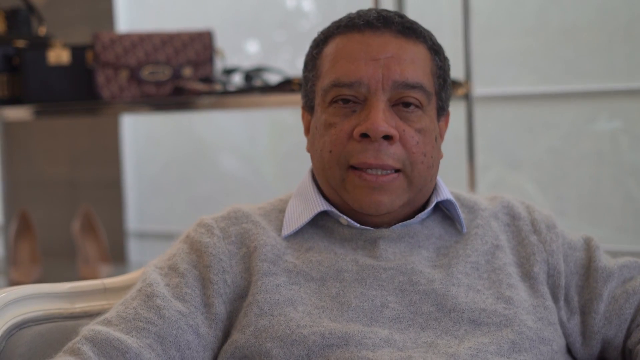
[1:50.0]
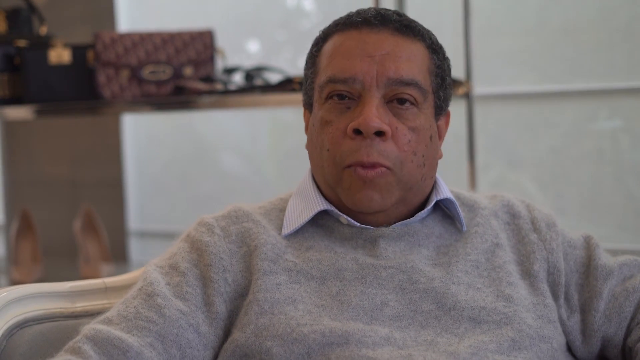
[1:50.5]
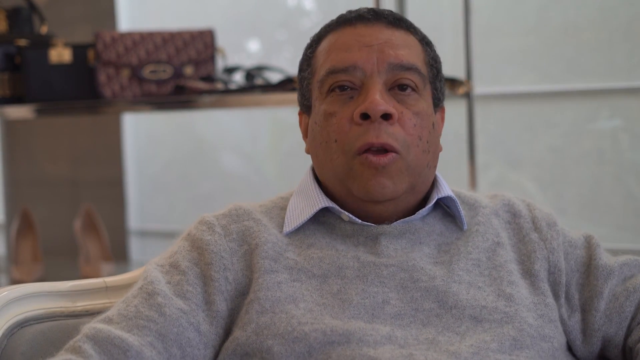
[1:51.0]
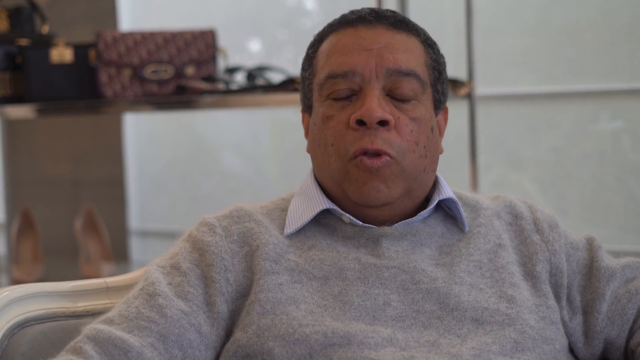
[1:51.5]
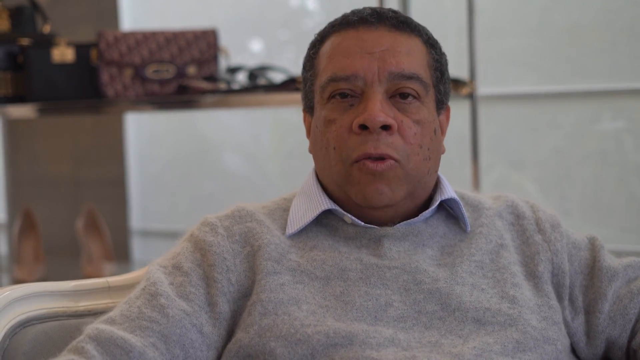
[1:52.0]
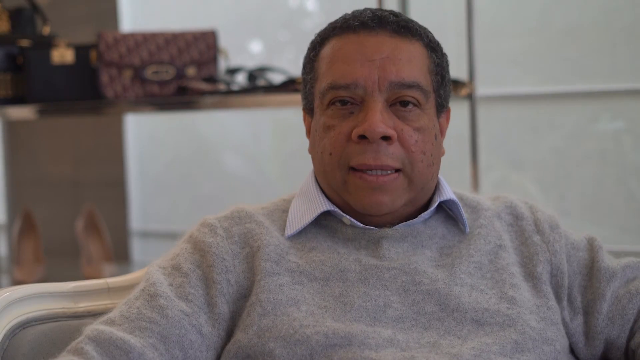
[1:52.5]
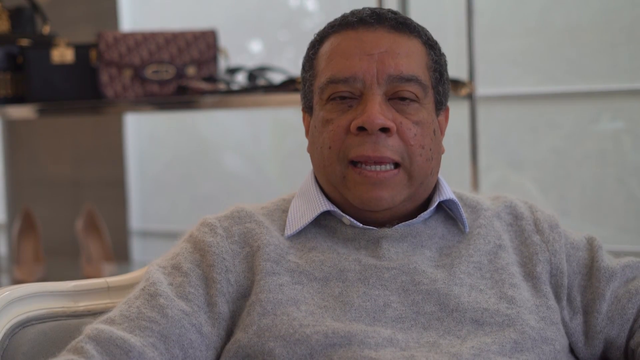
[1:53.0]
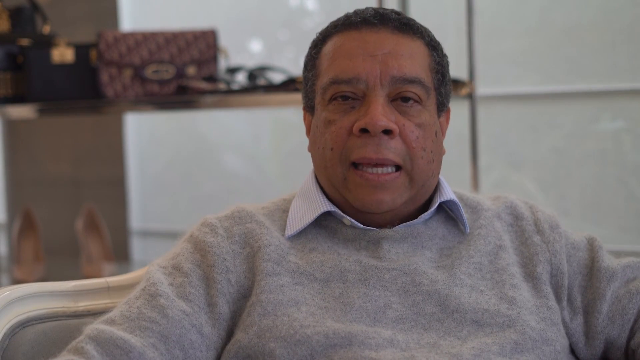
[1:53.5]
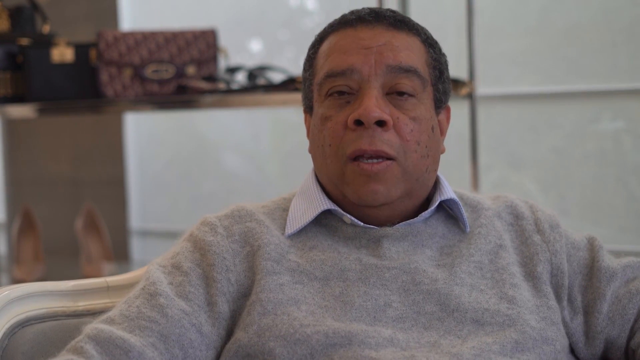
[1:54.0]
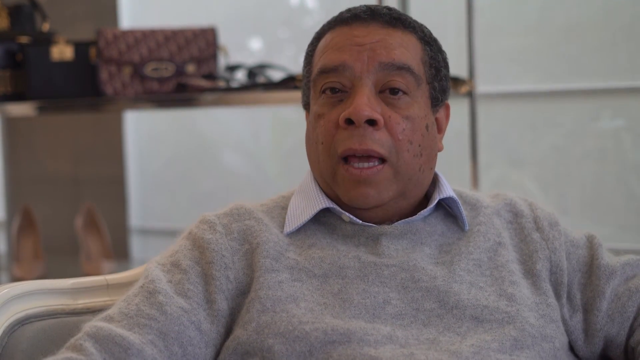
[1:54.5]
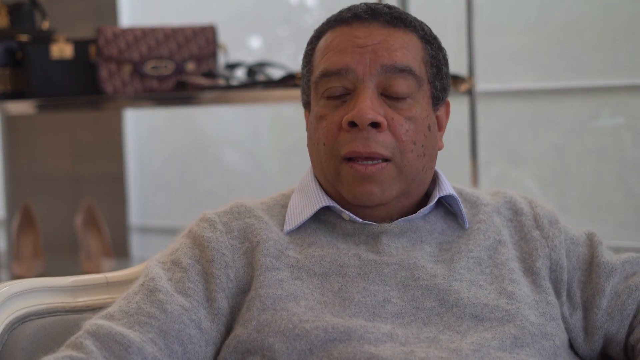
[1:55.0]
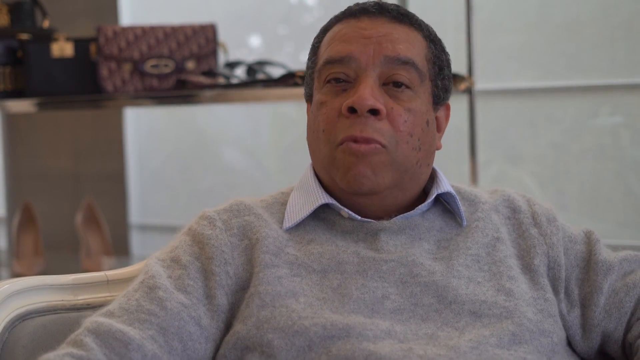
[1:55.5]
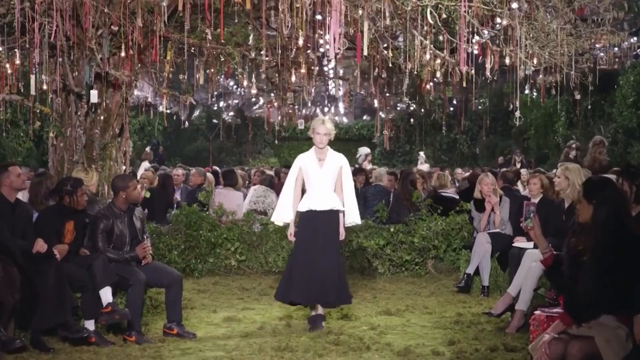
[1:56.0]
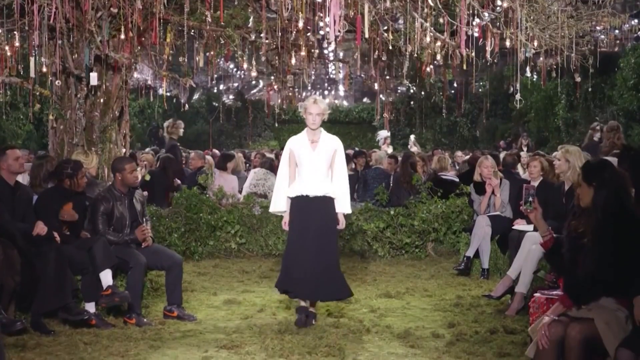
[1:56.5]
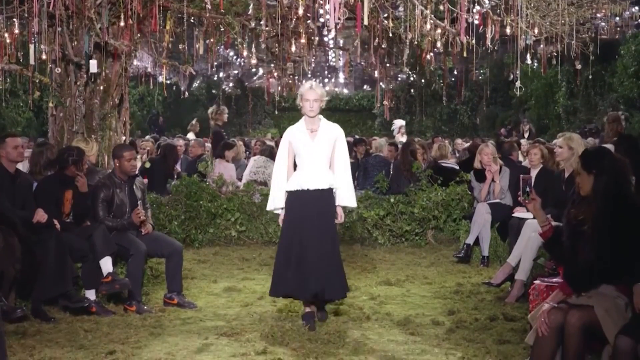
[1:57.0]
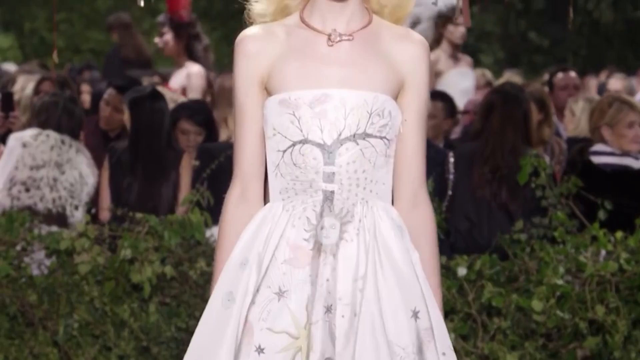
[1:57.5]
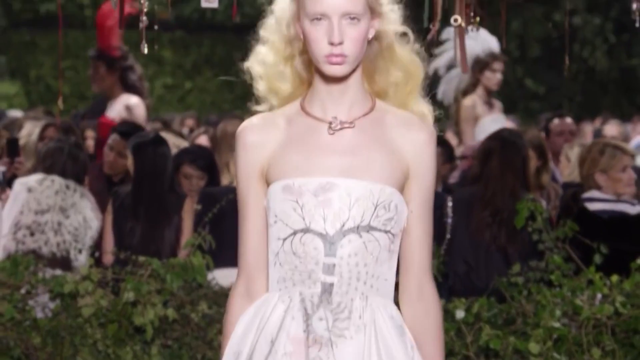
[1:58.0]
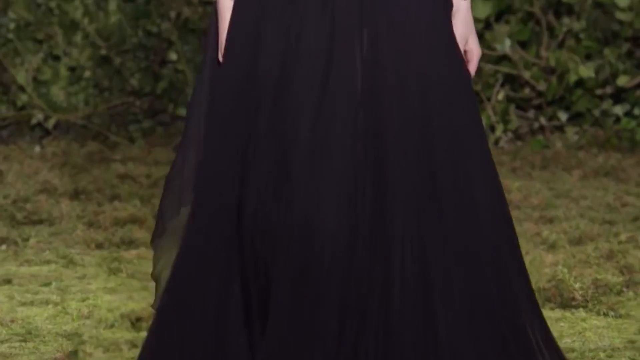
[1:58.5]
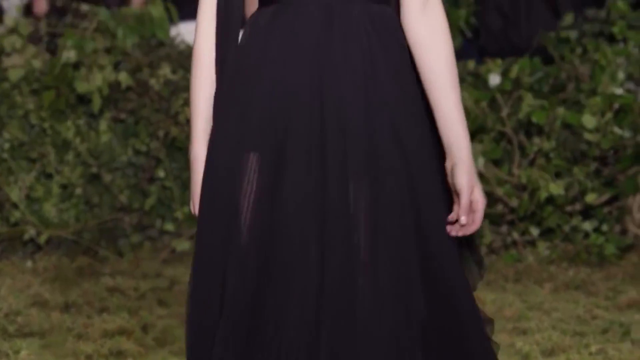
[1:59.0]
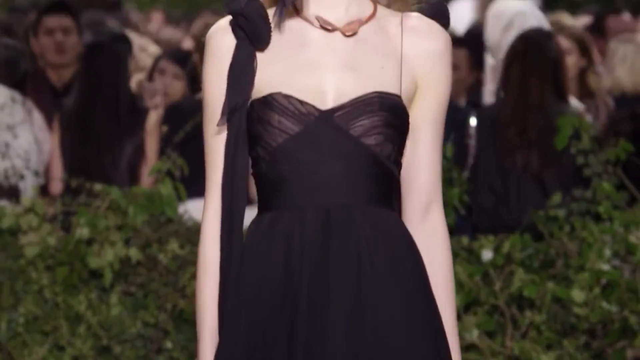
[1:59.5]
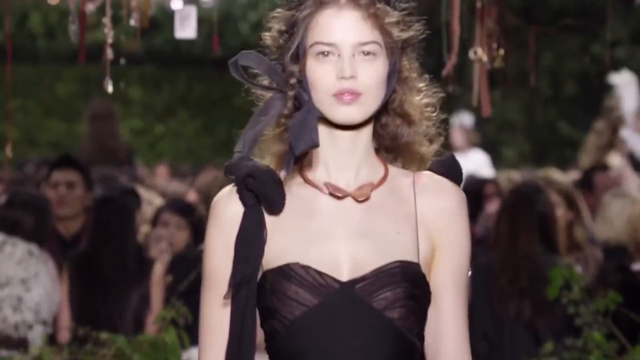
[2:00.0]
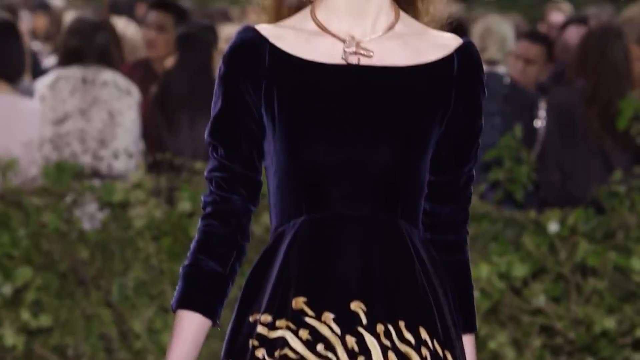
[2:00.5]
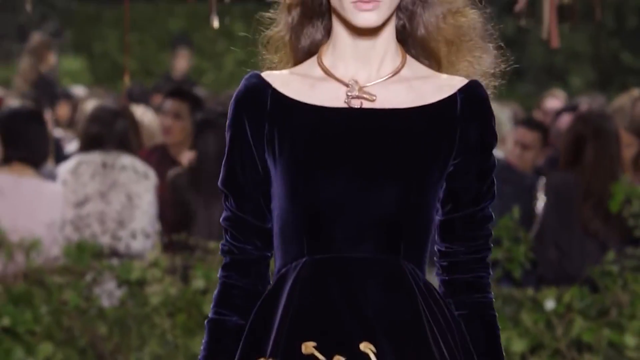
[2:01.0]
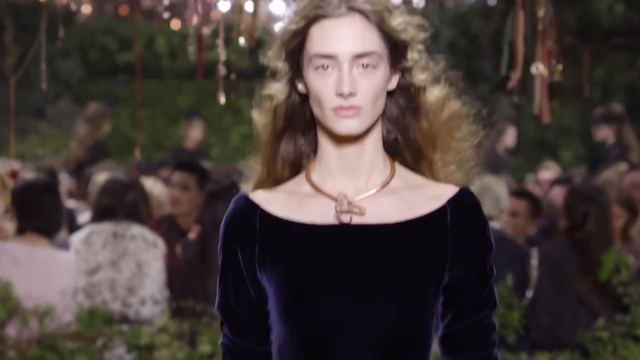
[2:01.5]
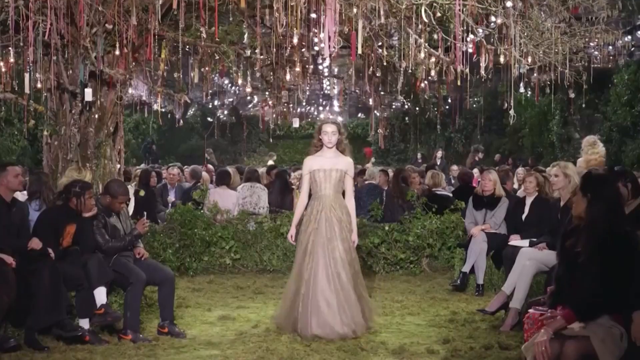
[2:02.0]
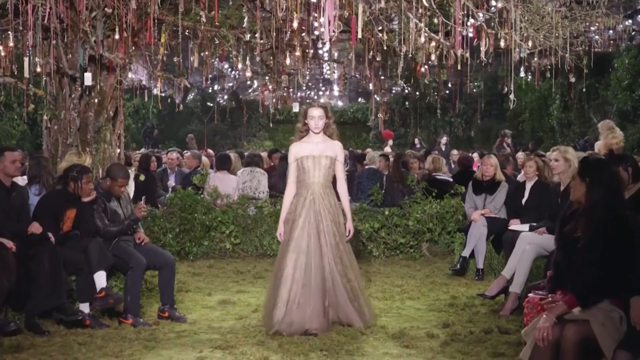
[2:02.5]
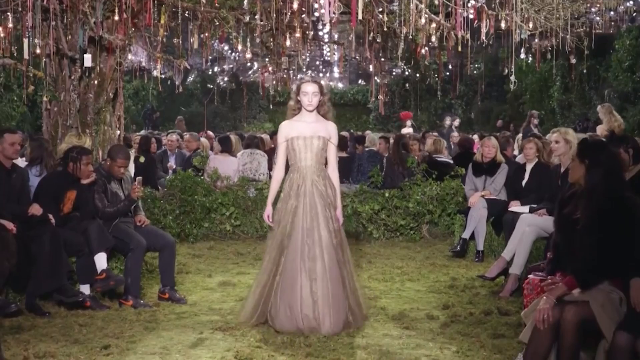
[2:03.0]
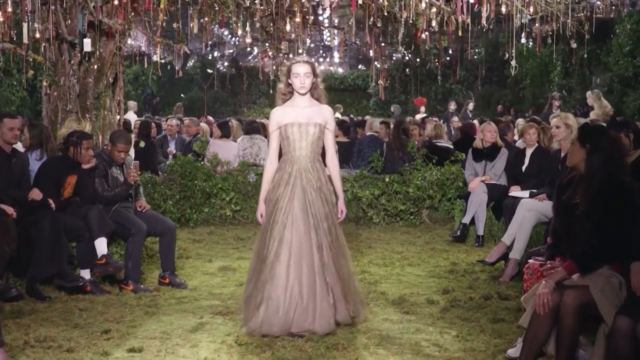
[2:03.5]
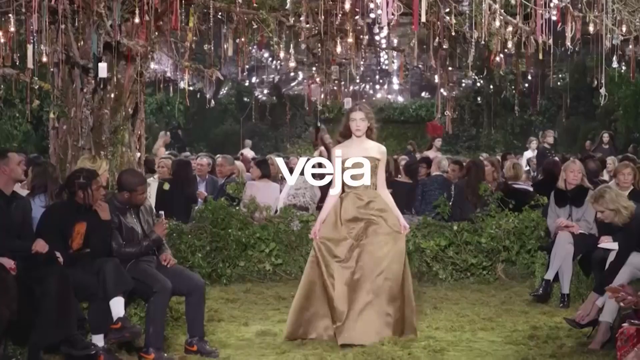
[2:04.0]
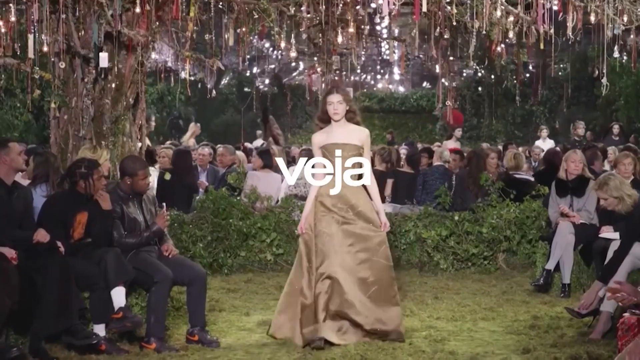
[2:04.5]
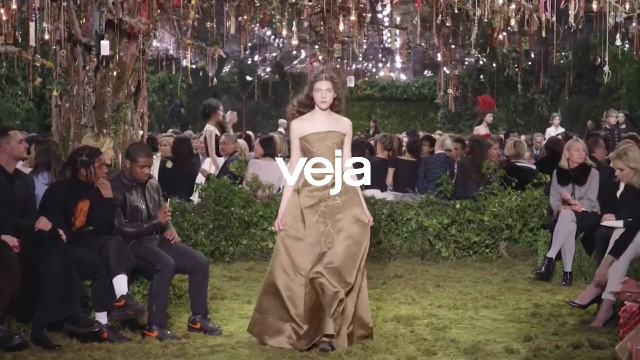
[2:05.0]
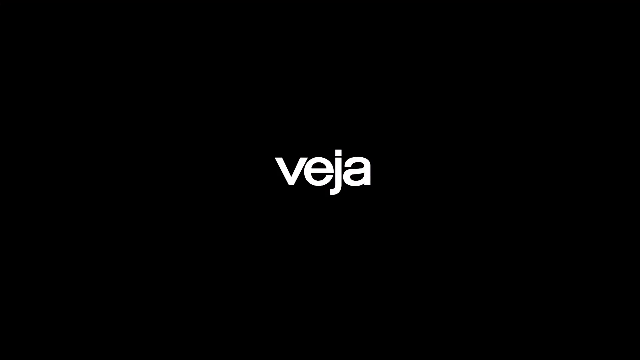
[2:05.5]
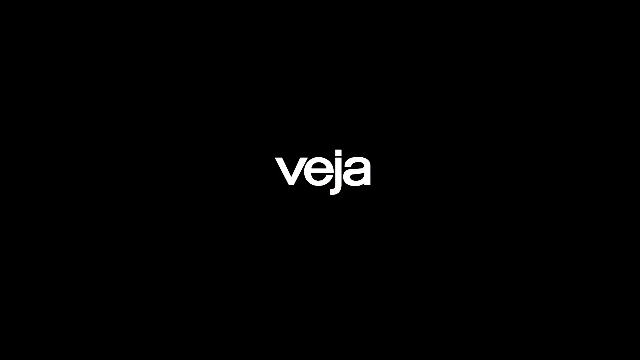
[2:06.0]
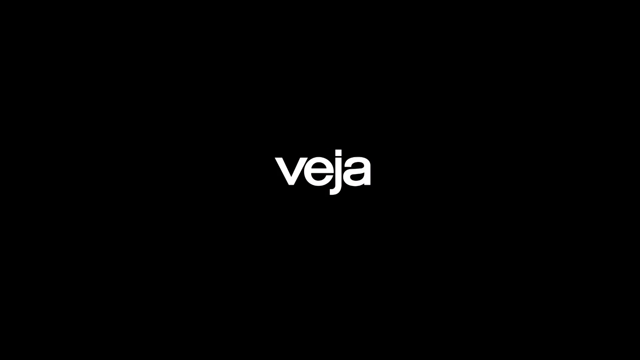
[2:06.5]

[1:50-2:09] A party takes place under a huge tree lit up for Christmas, full of Christmas balls and lights, with gigantic branches. Many people are sitting in what looks like a fashion setting, watching a parade. A woman parades in what looks like a Japanese kimono, white at the top and black on the arms, resembling a skirt, like a fighter's kimono. Then a woman in a black kimono and a woman in a white kimono appear. Then an ad for the magazine Veja appears.